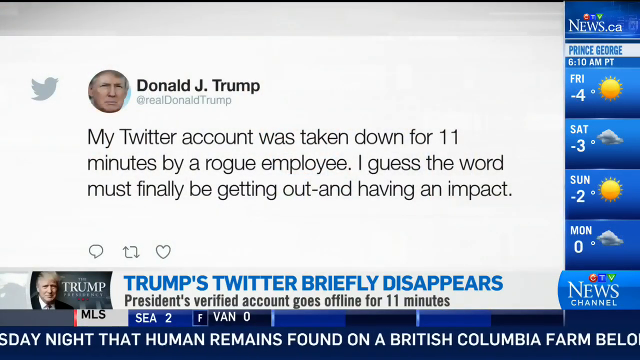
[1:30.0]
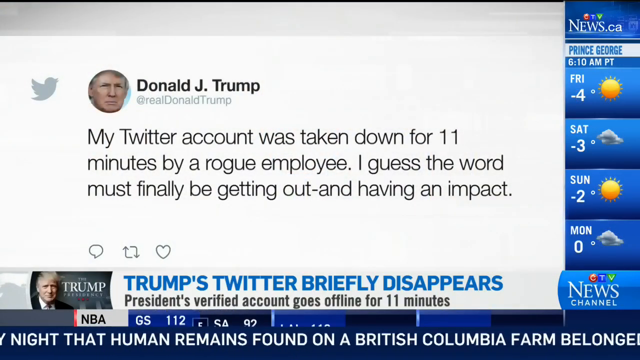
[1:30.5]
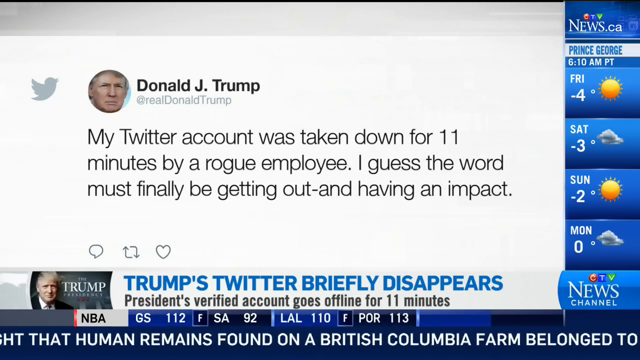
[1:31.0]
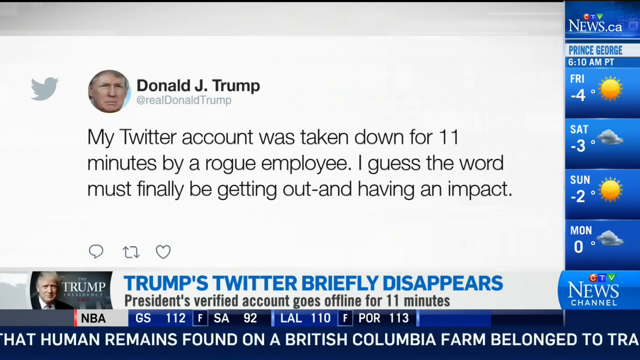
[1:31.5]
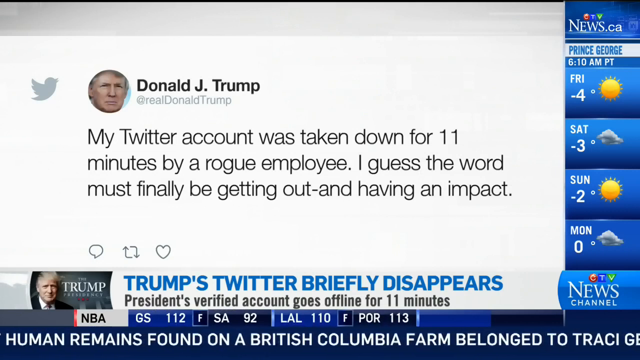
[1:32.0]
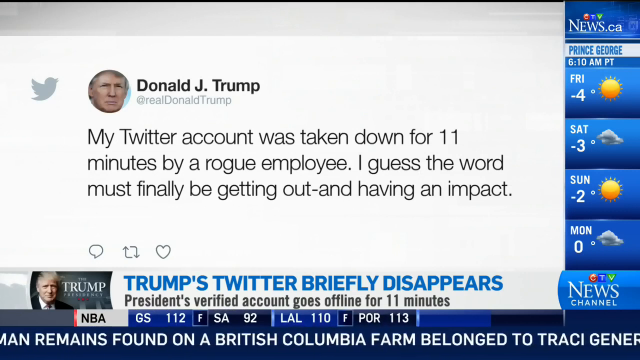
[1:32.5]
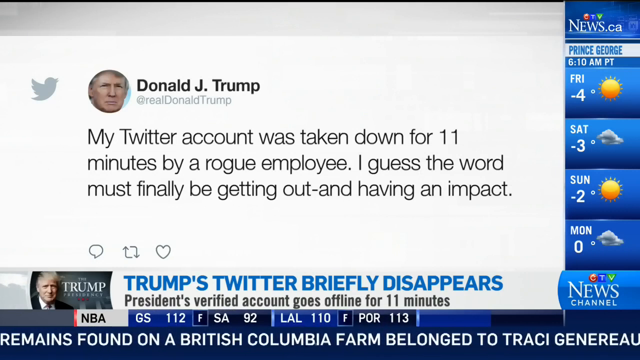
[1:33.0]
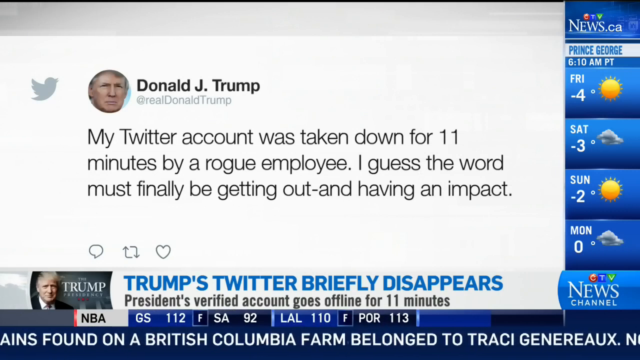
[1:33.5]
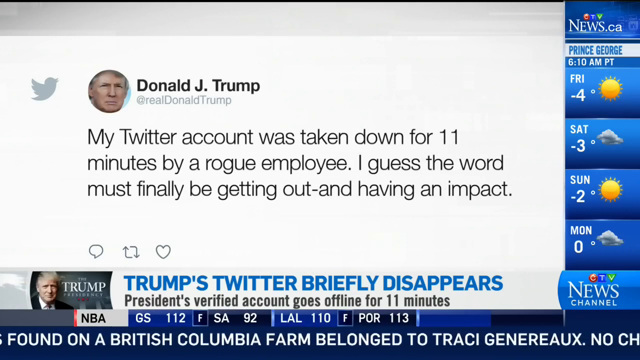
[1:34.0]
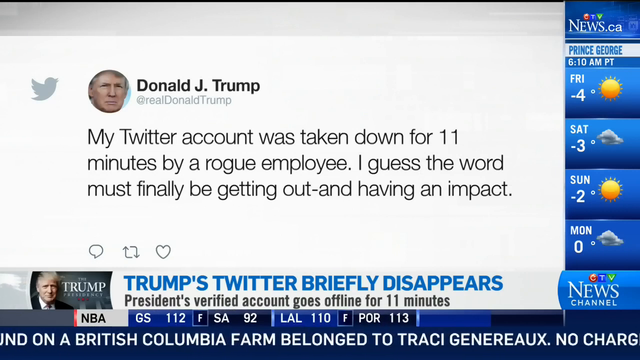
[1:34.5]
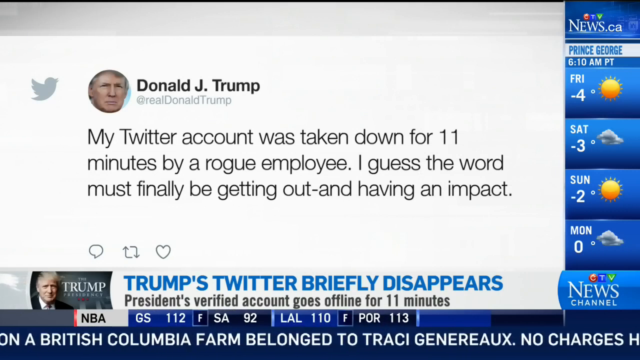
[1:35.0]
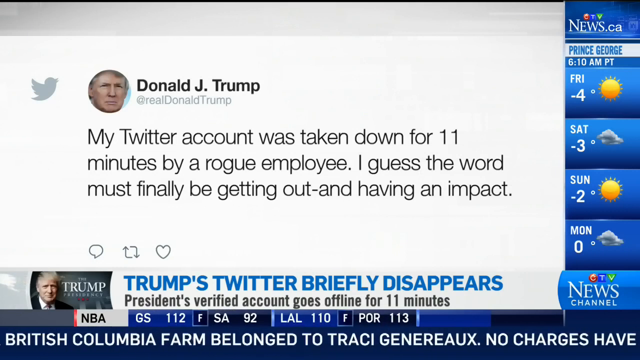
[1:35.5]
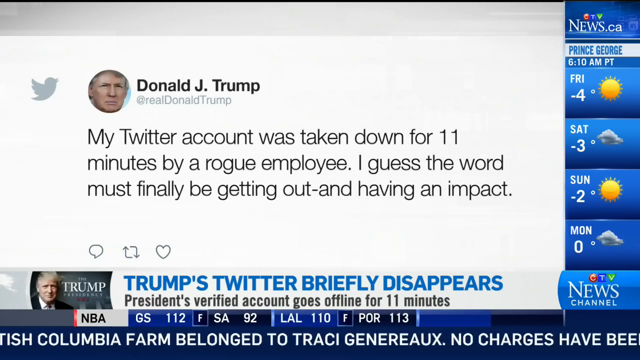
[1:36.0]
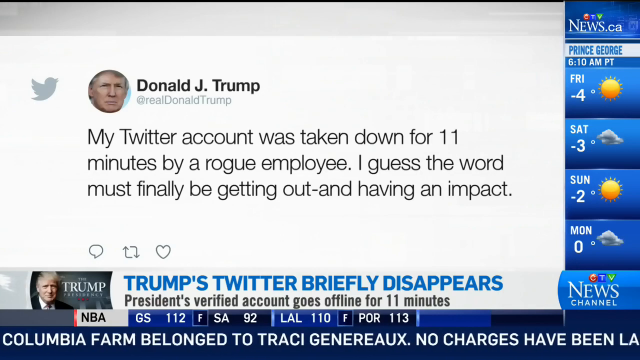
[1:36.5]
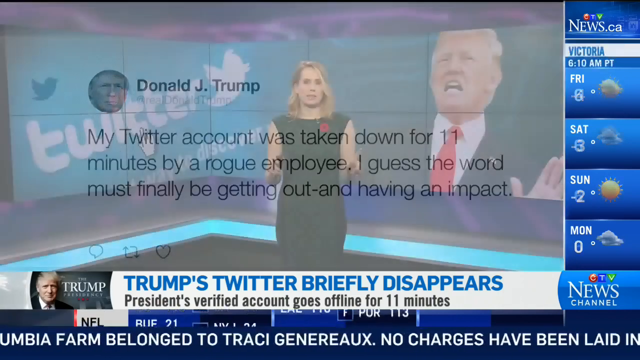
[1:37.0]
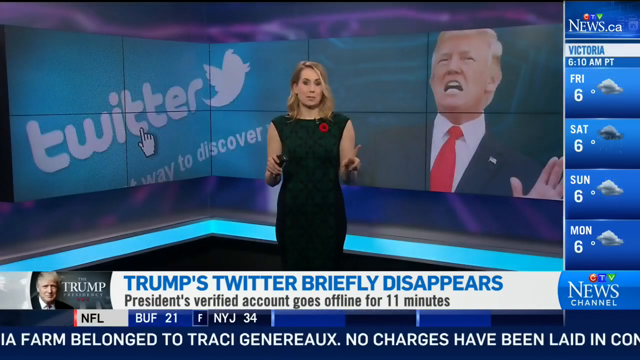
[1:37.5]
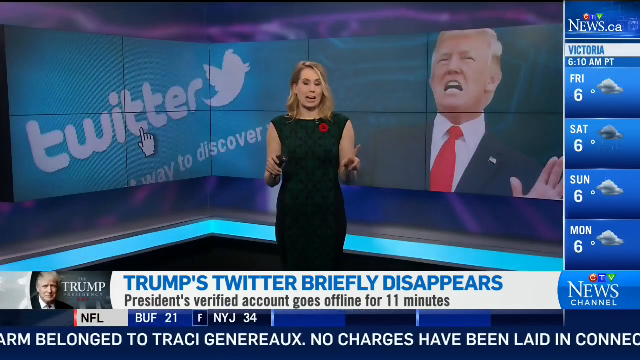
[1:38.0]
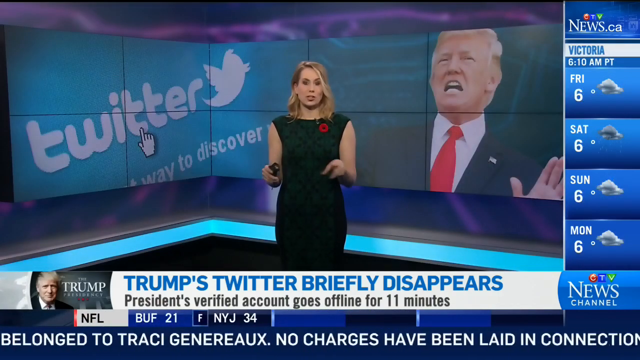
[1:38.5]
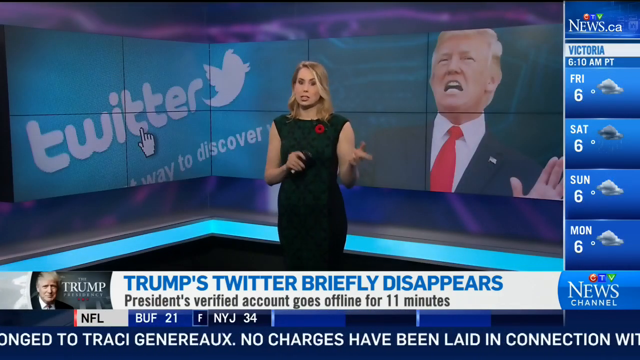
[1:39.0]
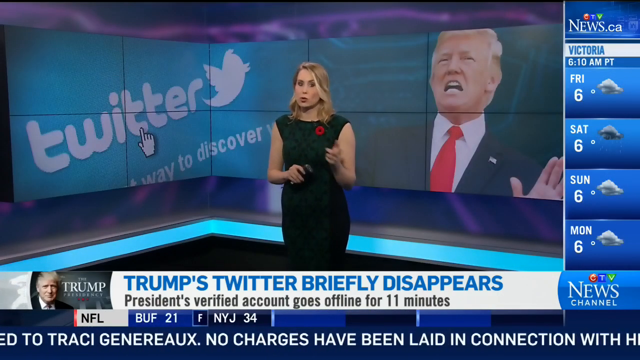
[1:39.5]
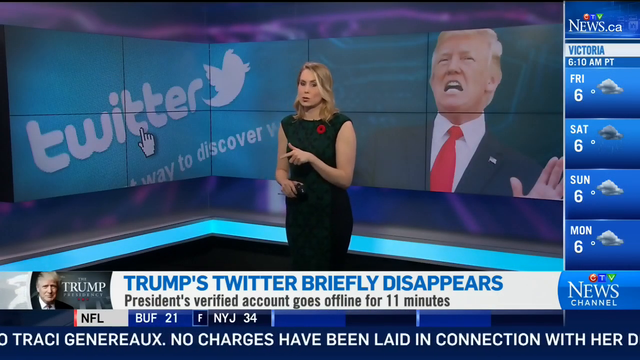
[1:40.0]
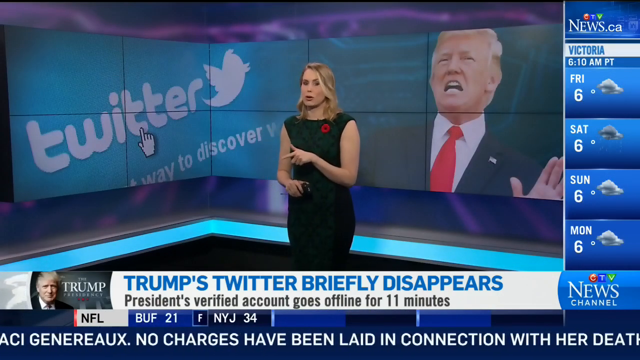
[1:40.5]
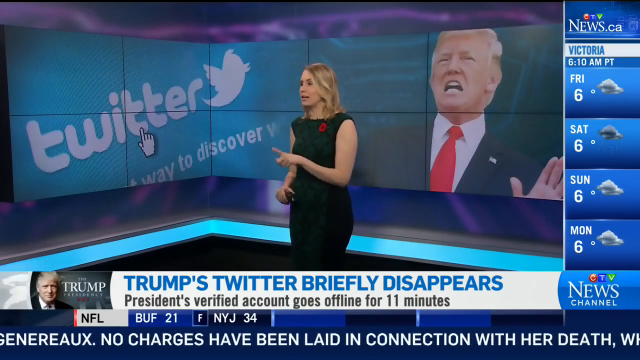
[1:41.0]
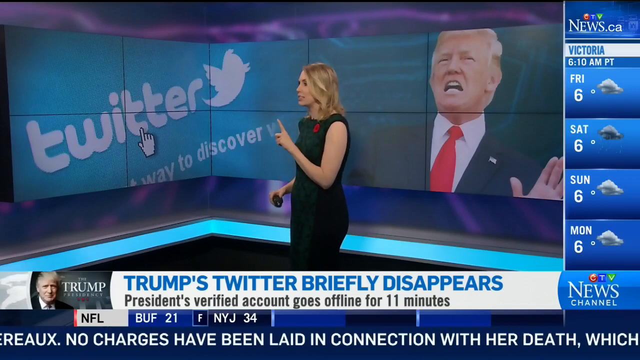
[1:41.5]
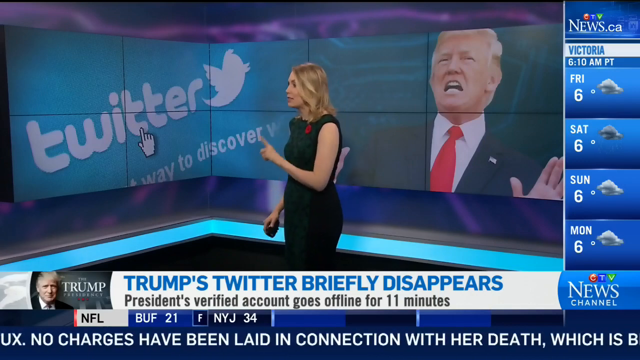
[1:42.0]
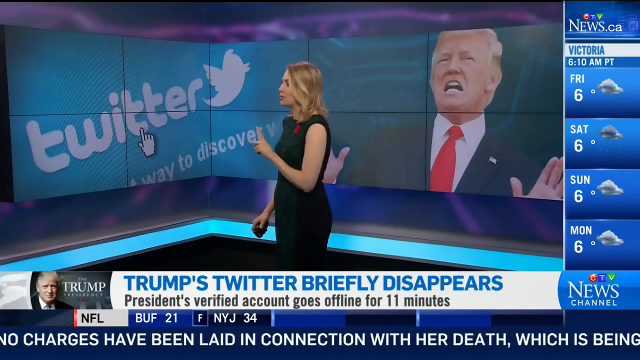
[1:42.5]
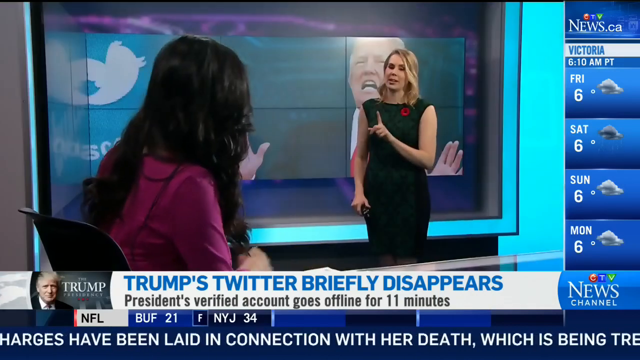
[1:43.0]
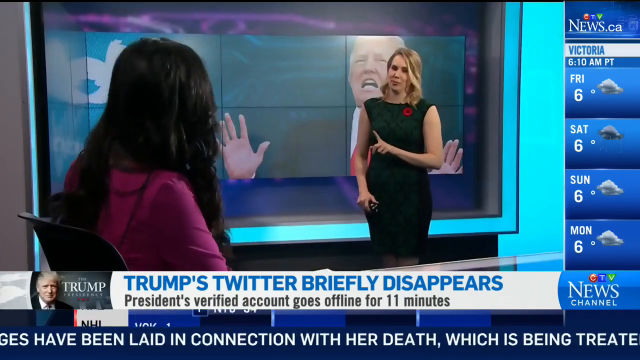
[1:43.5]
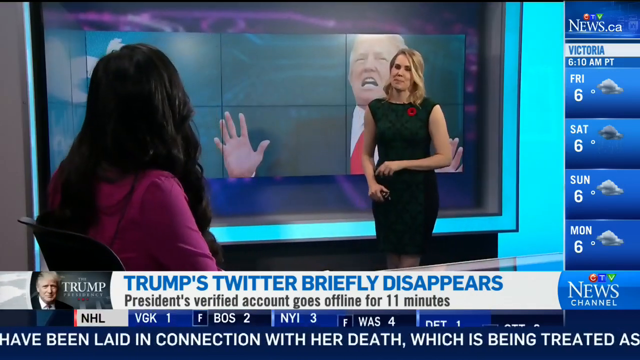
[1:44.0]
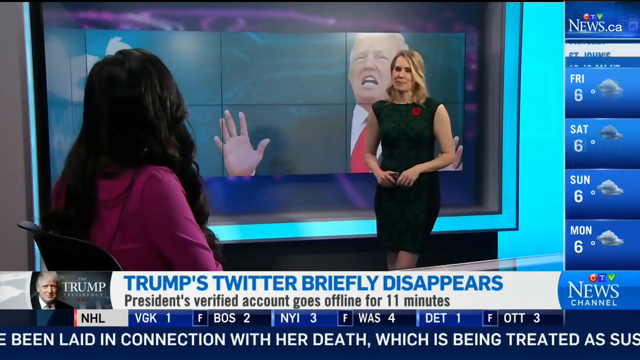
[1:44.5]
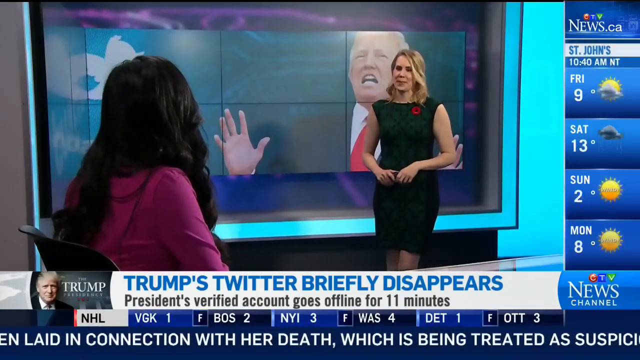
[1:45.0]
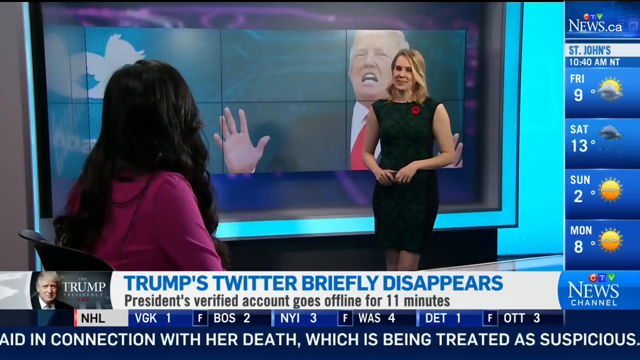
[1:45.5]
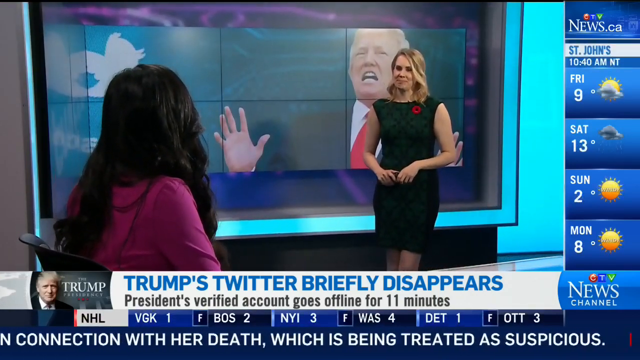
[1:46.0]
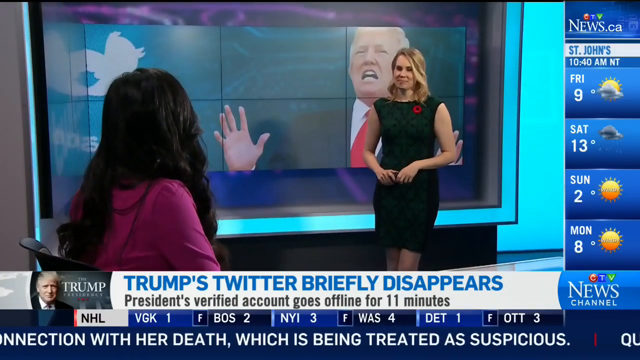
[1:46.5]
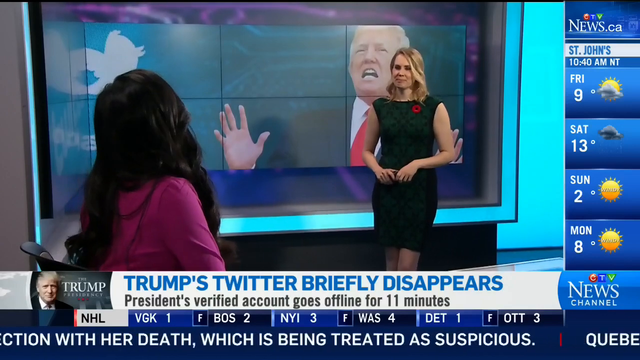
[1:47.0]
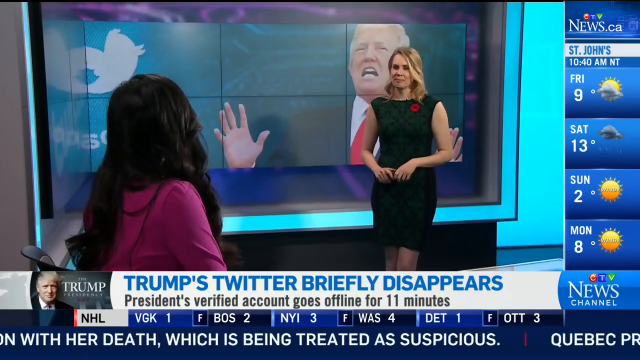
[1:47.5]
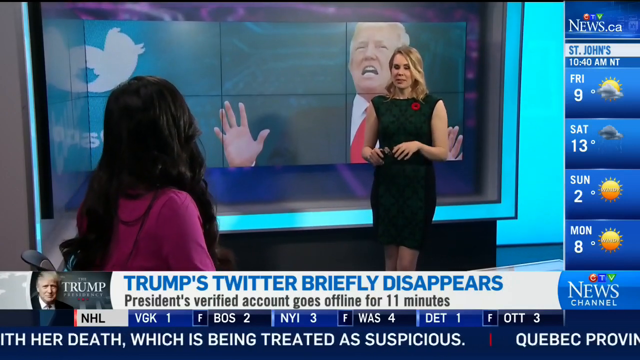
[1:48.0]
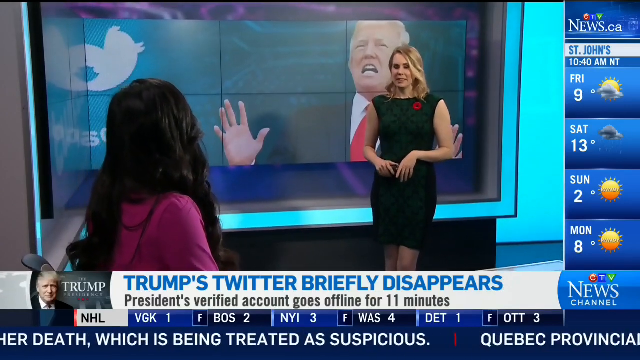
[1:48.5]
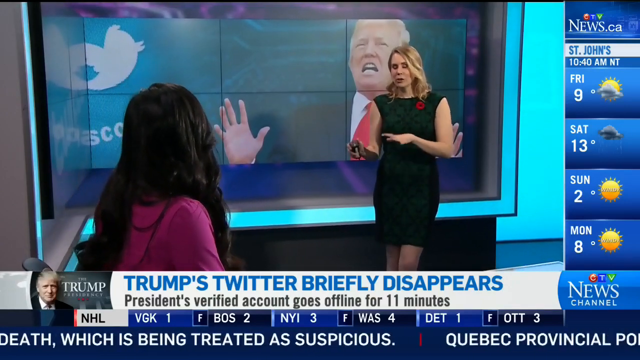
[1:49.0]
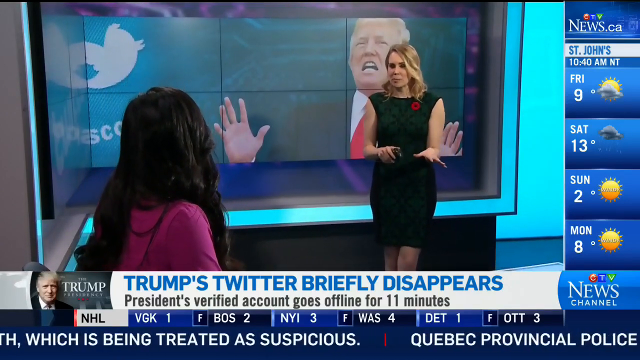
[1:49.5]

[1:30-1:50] Donald Trump's tweet about his account being taken down stays on screen for a little while. The weather report changes to a town called Victoria, showing six degrees. NBA scores for Golden State, San Antonio, the Lakers and Portland appear, along with NFL scores for Buffalo and the New York Jets. The video returns to the woman in the black sleeveless dress, with the shot of Donald Trump and the Twitter logo on a large screen behind her. She is talking to the first reporter, the Asian woman with long hair, whose face is barely visible; mostly the back of her head is seen, with her hair down her back. The Asian woman wears a fuchsia-pink outfit, apparently a pink skirt set. The other woman has a noticeable red brooch pinned on her dress and a microphone in her hand.